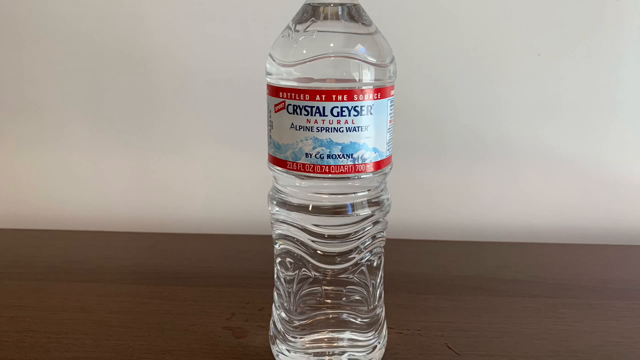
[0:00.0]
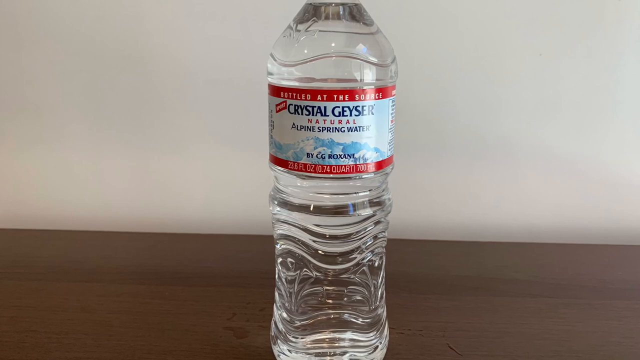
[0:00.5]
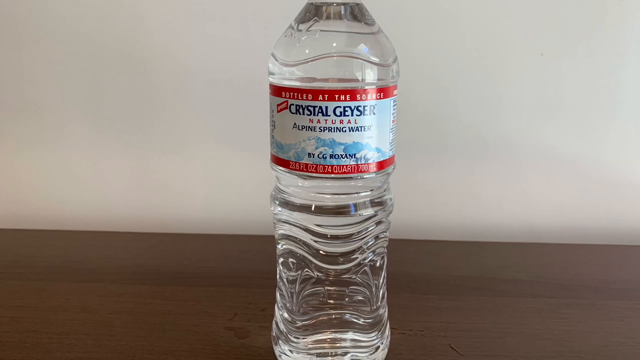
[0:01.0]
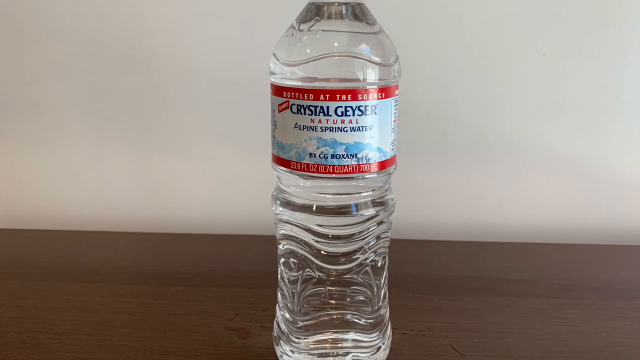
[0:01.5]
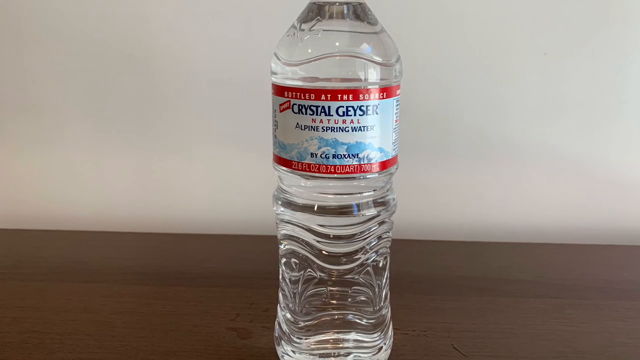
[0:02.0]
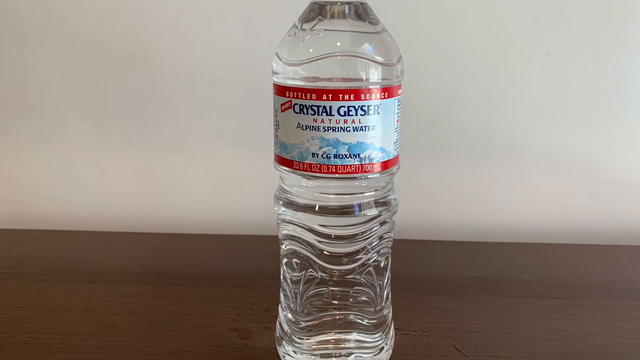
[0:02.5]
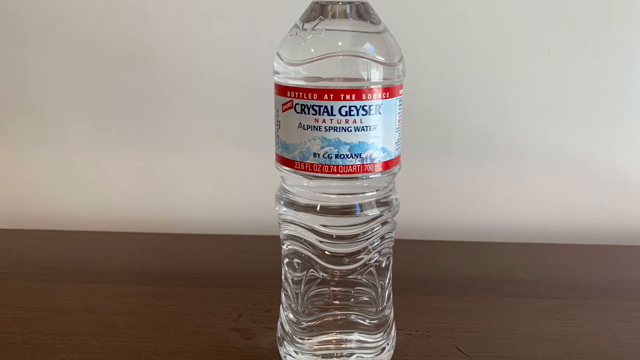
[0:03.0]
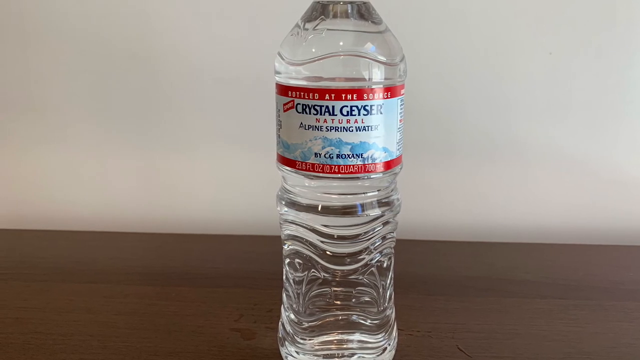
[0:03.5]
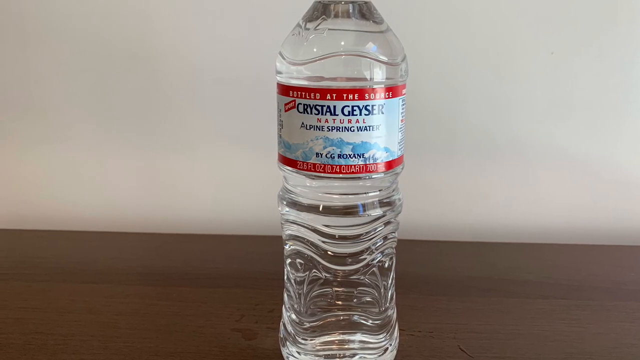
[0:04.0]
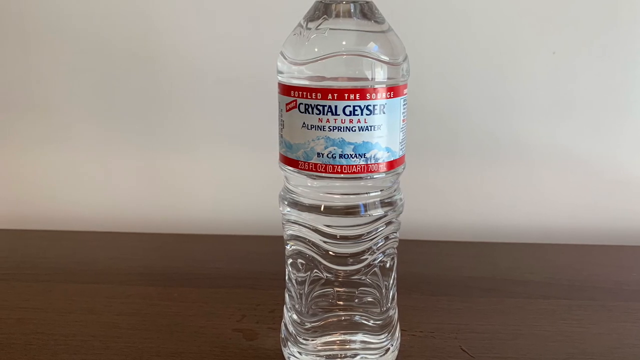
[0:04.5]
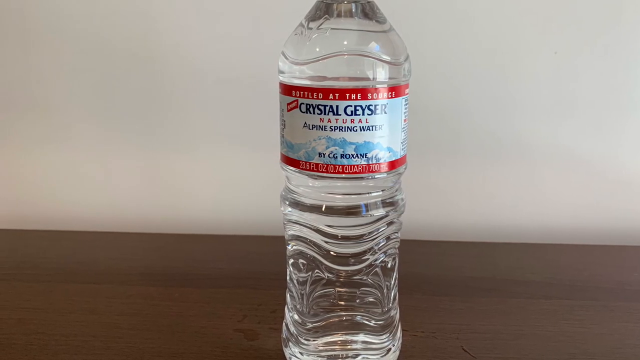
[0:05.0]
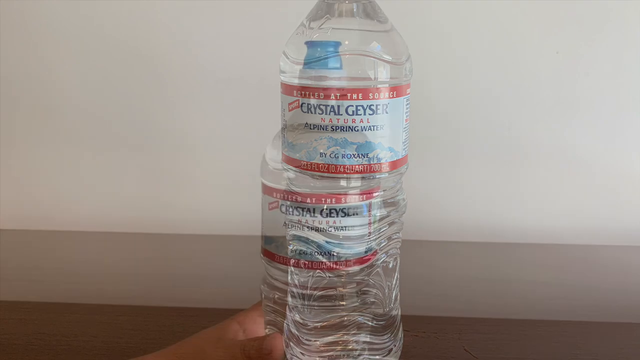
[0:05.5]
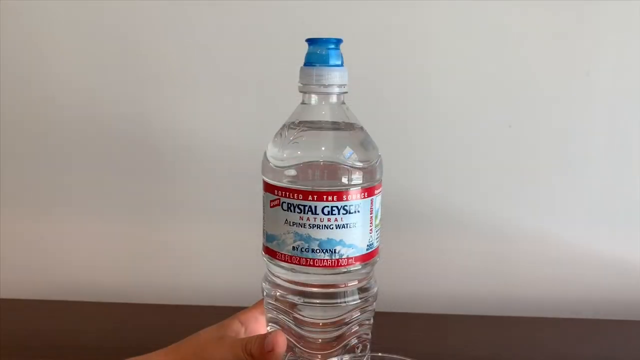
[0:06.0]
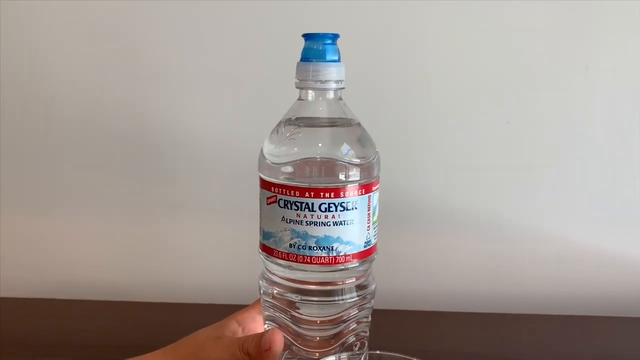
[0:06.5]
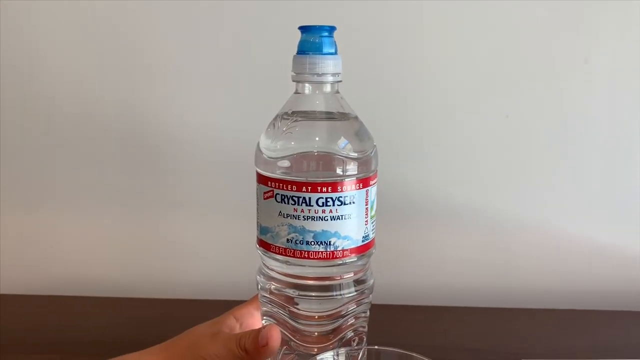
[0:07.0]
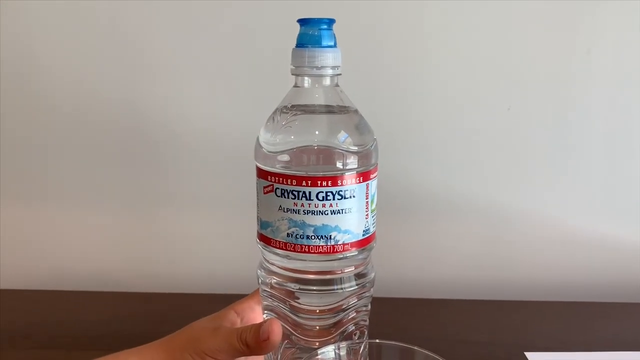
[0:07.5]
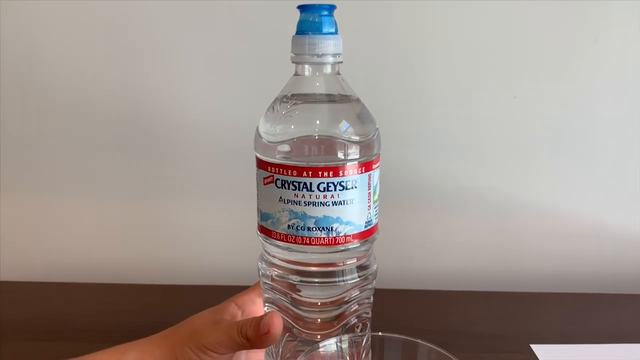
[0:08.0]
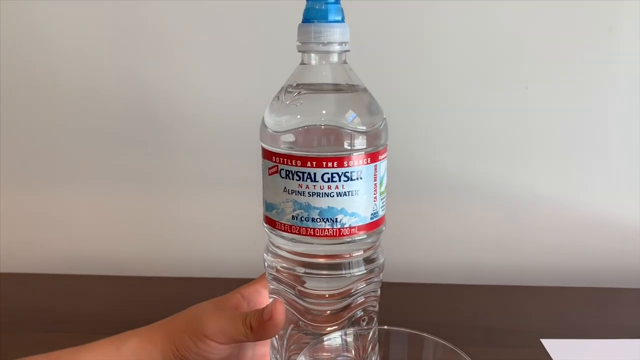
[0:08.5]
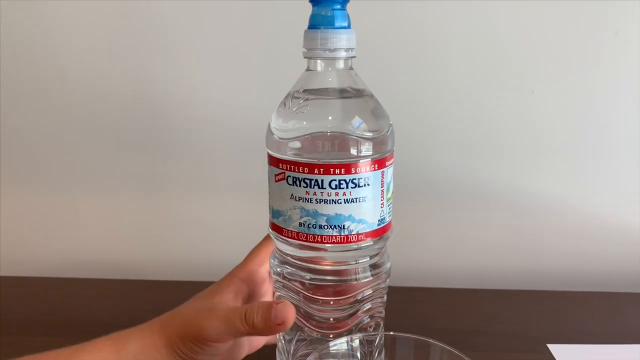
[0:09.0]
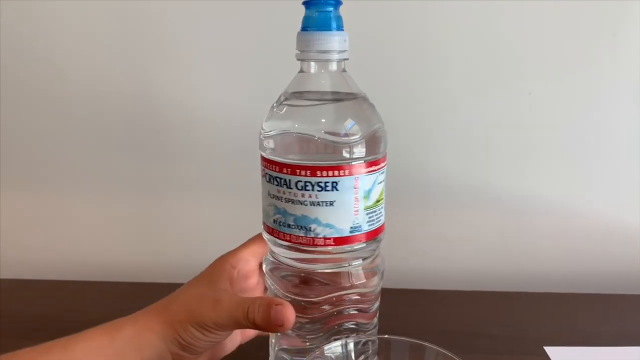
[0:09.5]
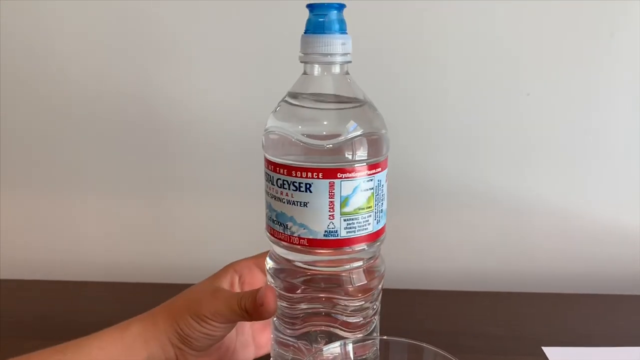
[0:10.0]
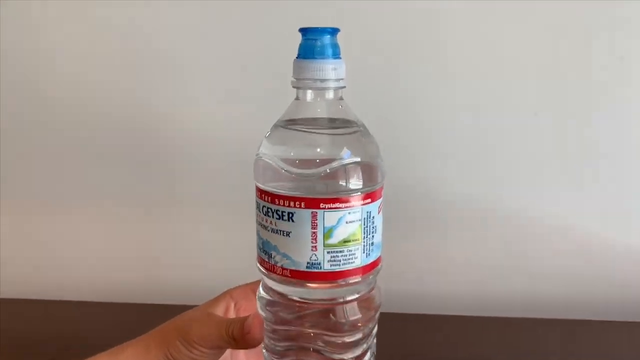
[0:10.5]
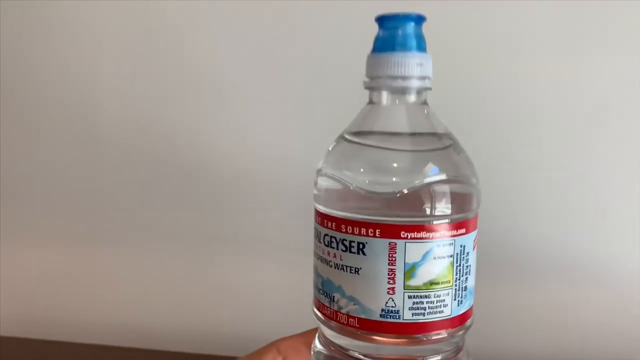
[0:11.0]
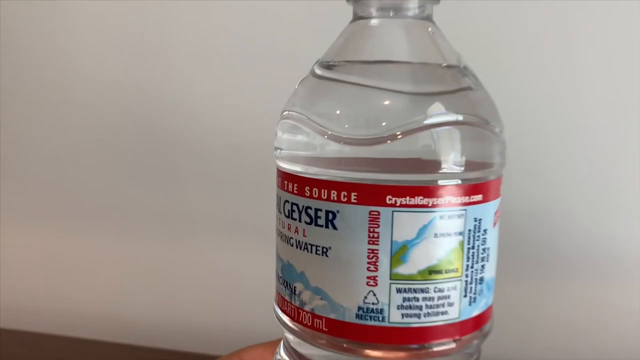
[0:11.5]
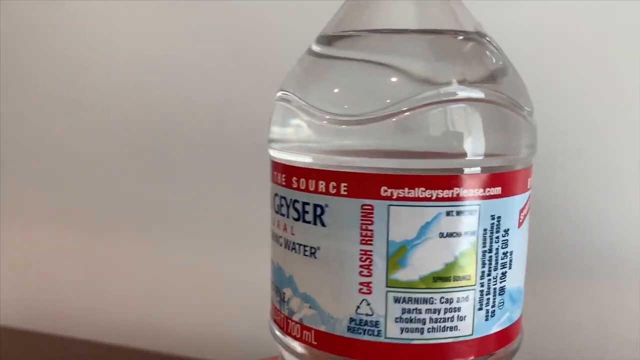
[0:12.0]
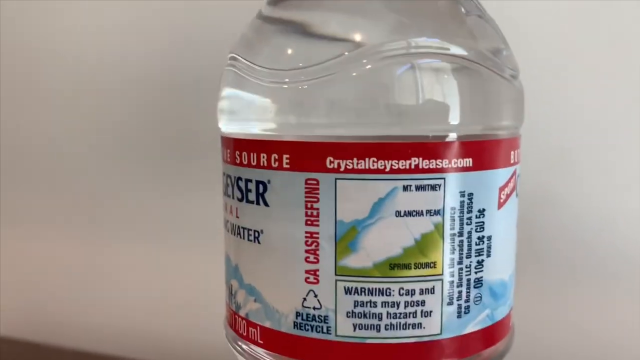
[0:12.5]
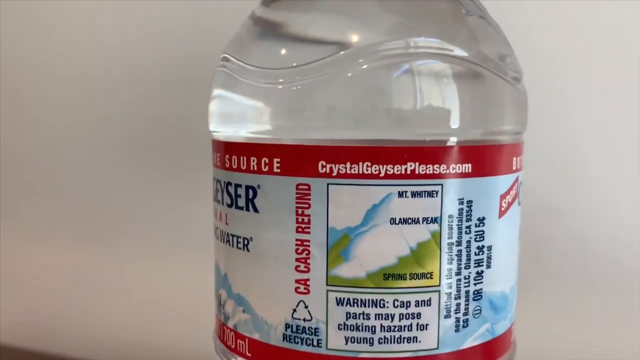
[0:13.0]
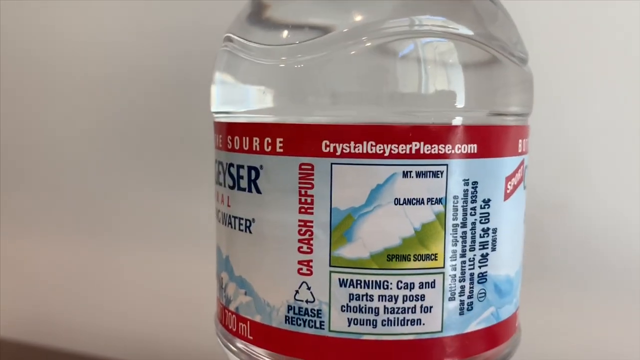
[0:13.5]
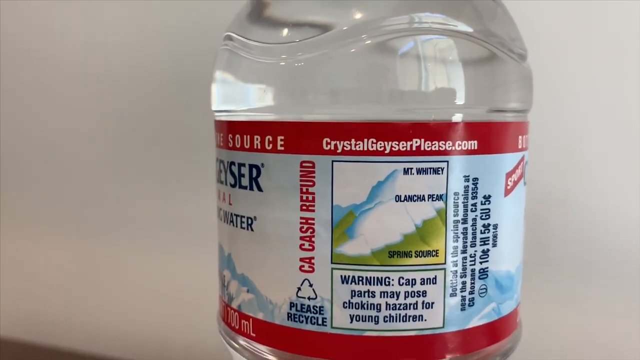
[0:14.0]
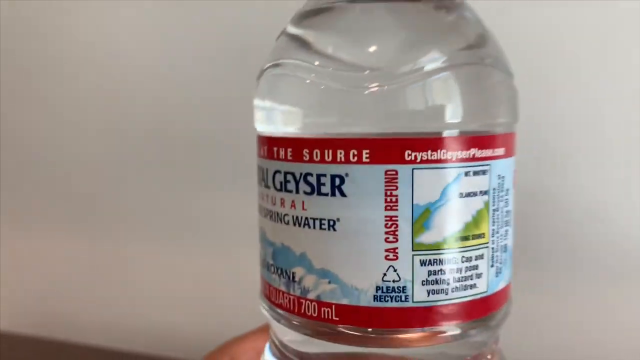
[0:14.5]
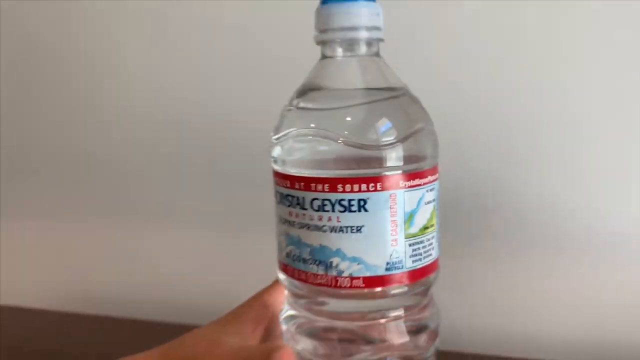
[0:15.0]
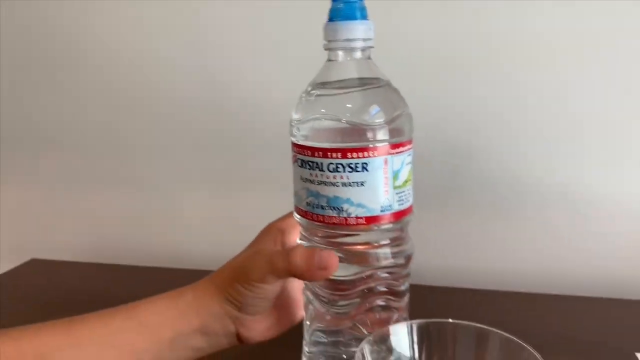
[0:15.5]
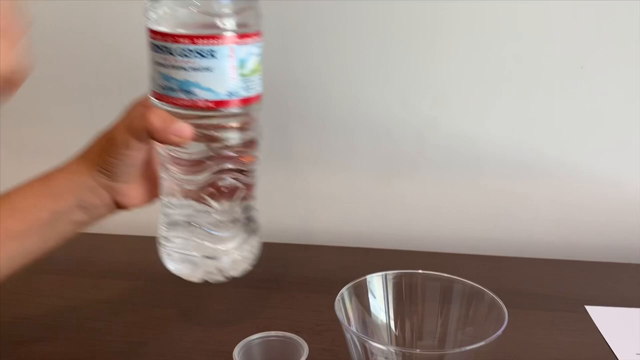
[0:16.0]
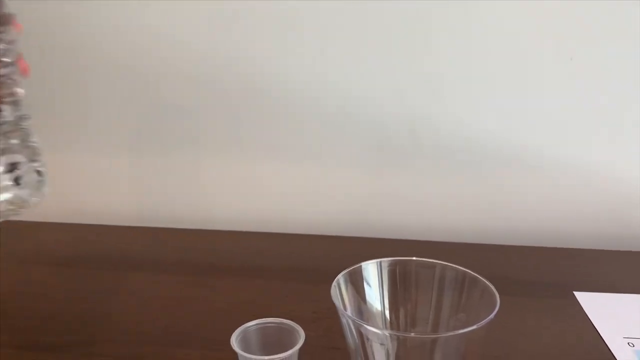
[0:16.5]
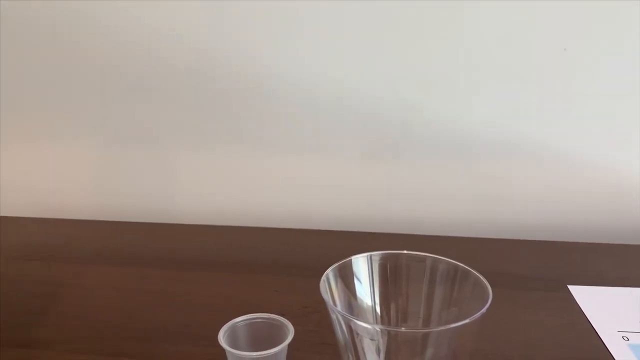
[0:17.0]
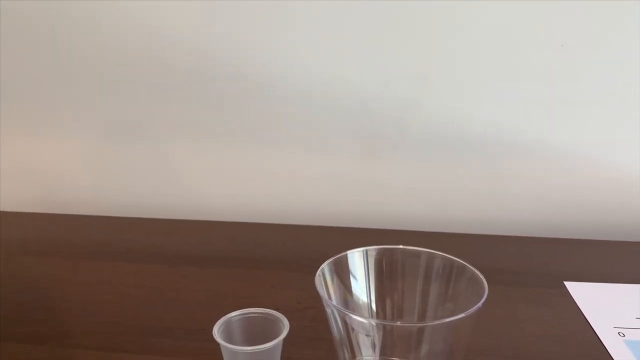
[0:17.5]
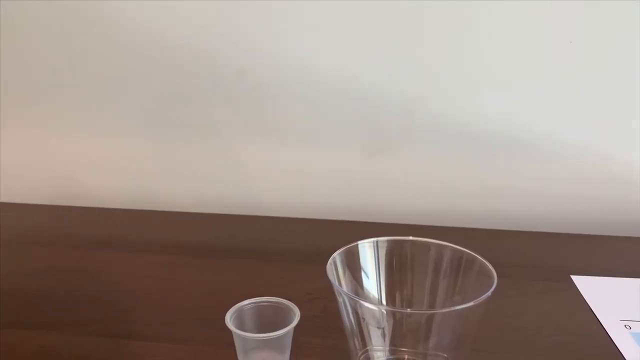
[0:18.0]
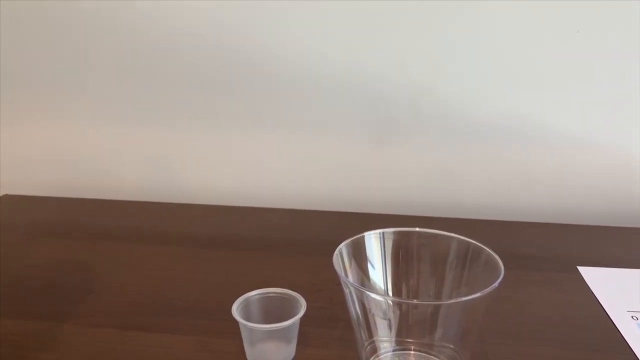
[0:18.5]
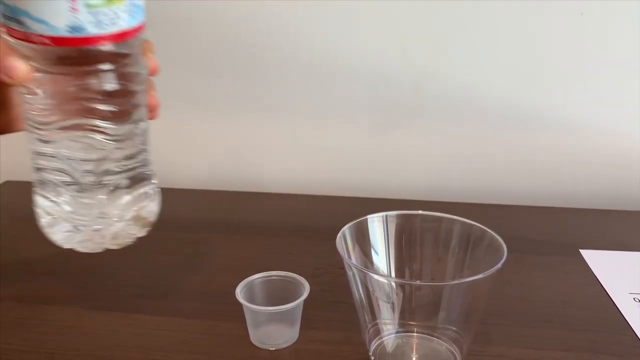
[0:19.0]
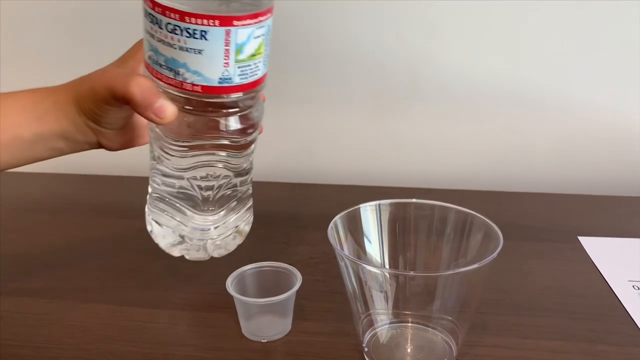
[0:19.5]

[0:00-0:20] A Crystal Geyser natural alpine spring water bottle is on a wooden table, with nothing else visible on the table at first. The wall is white. The label says the bottle is 23.6 fluid ounces. The camera very slowly pans to the left, then fades out and shows the bottle now being held by a hand that looks like a child's hand, with a small-looking thumb. The hand re-grips the bottle to twist it around. The camera zooms in on the label, which shows "Mount Whitney", "spring source" and "Olancha Peak", along with a warning about the bottle. The camera then zooms out, showing that the child has picked up the bottle and taken off its cap.